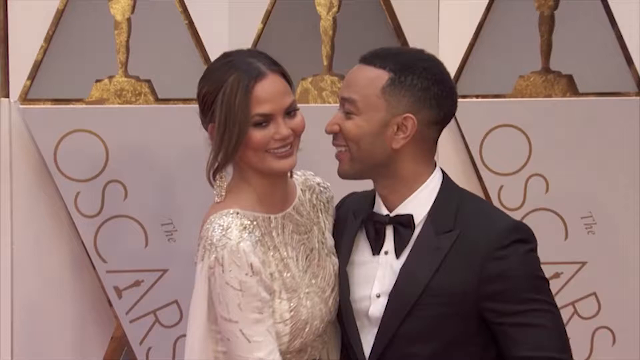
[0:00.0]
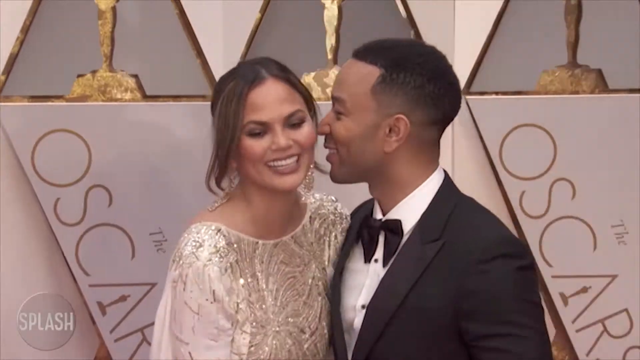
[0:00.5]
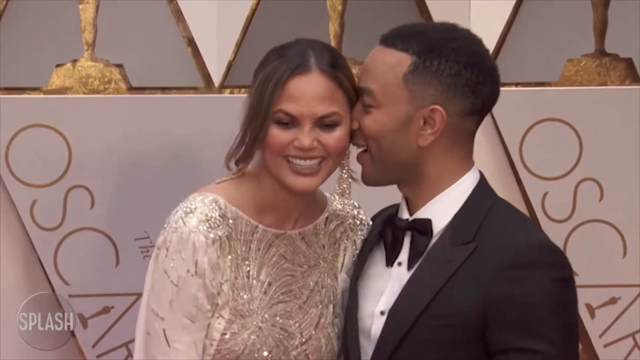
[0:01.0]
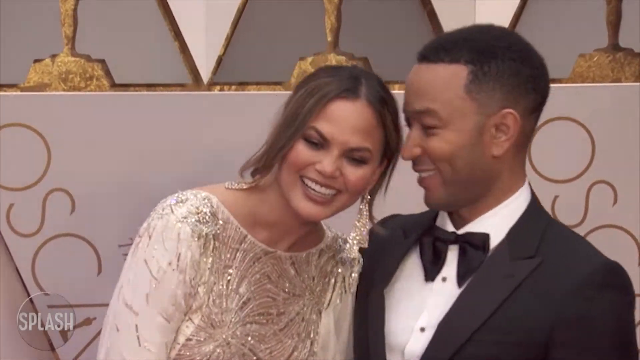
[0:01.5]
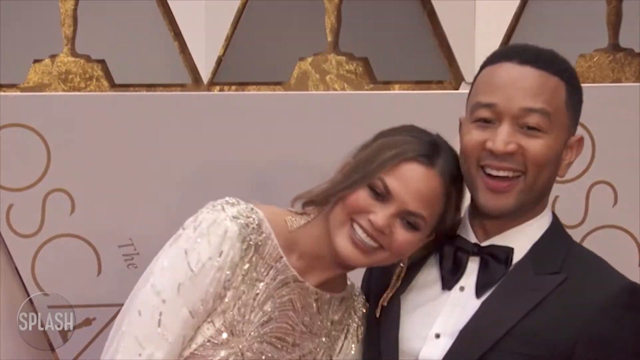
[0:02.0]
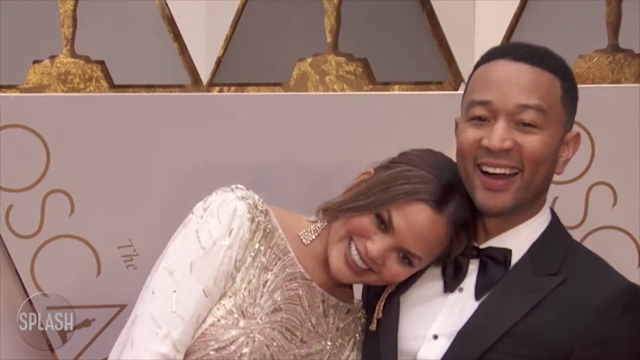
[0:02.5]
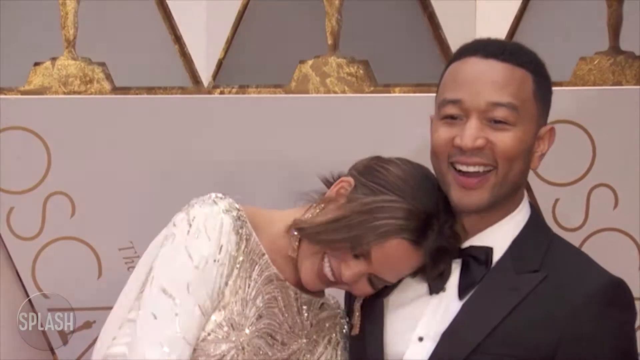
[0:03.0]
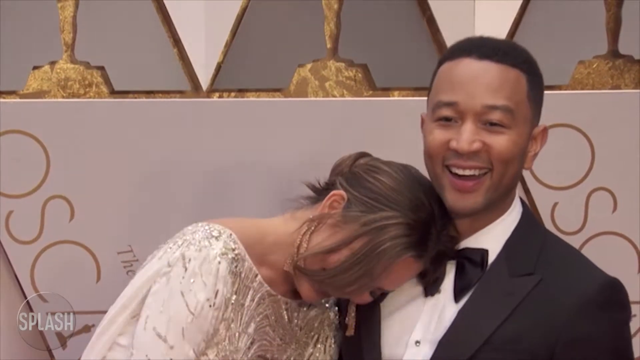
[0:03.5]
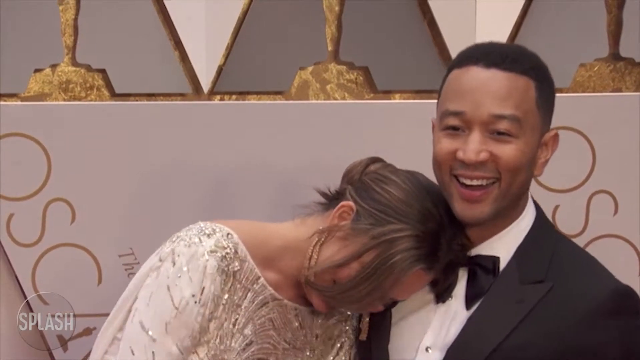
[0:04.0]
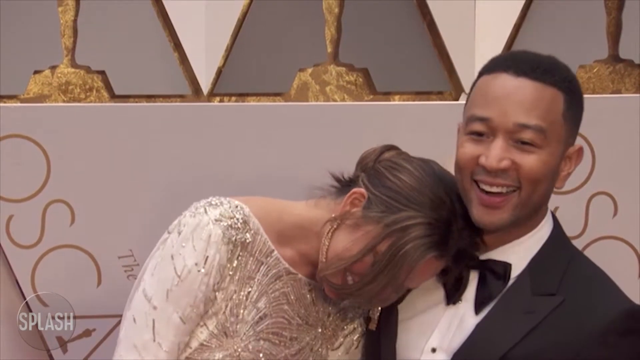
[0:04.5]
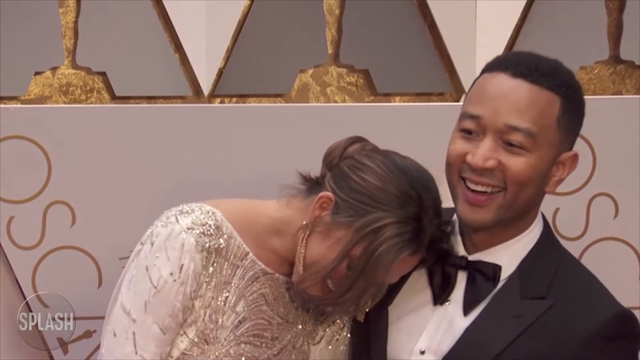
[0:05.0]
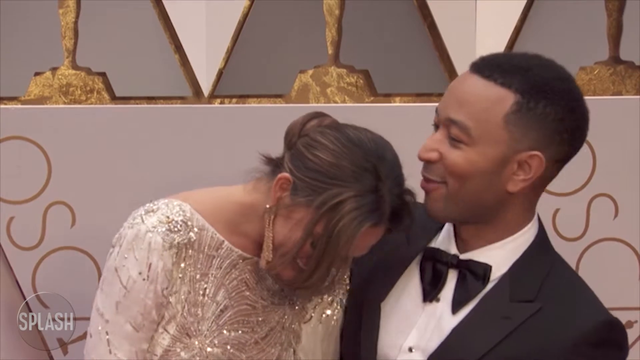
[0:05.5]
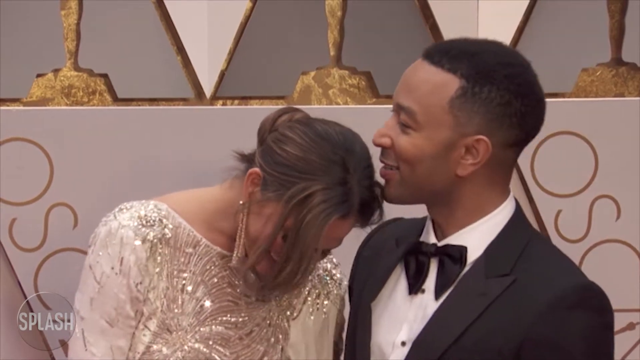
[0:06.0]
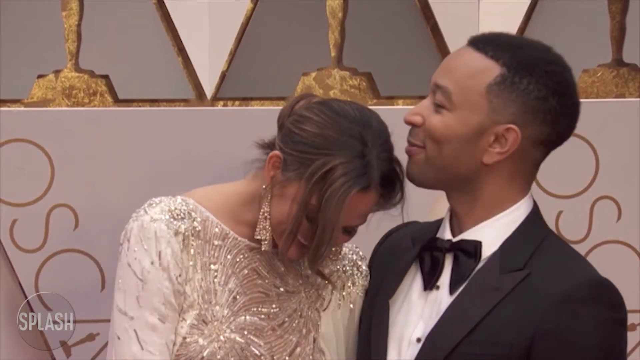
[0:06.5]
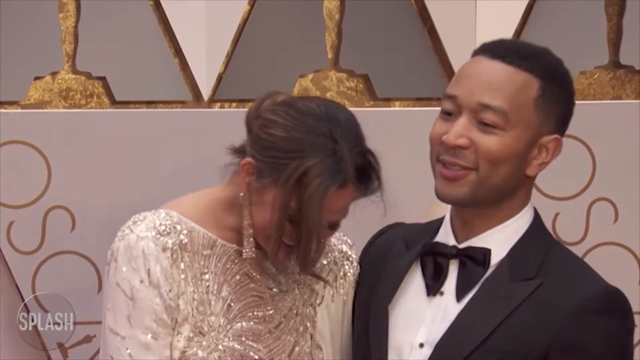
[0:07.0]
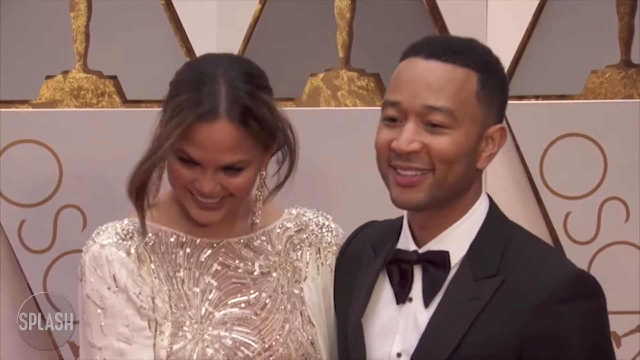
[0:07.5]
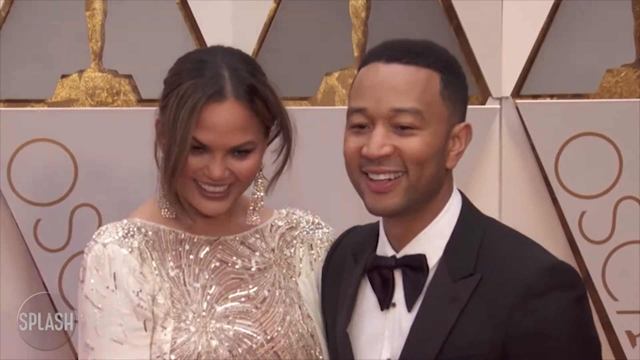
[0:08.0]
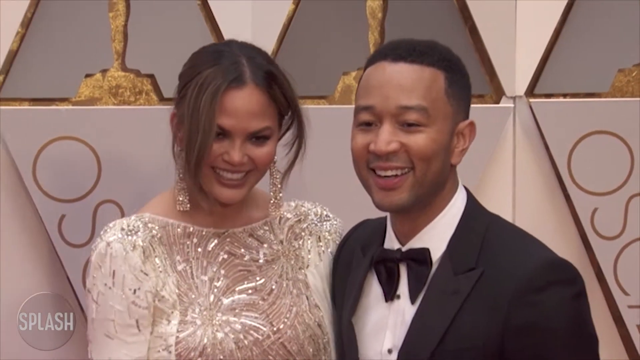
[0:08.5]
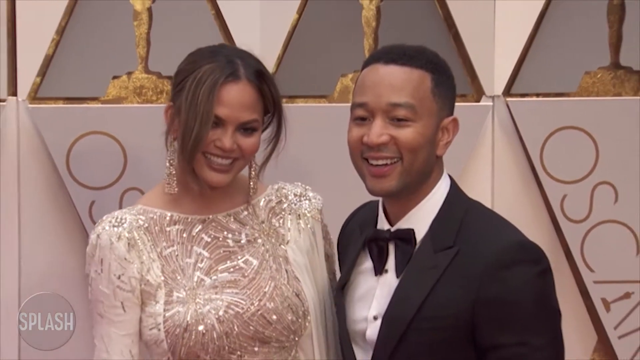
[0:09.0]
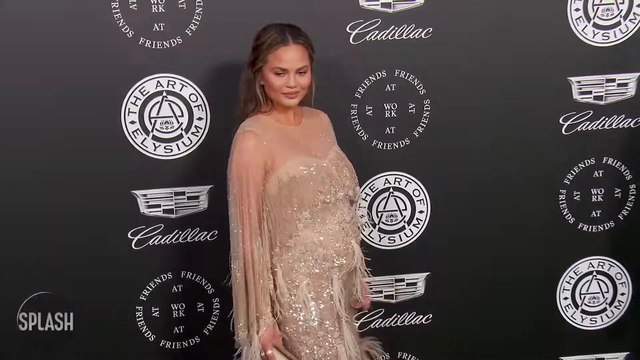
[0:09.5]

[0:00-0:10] The video is apparently about John Legend and Chrissy Teigen at the Oscars, and it opens with footage of them there. They pose, laugh and talk together. John Legend wears a tuxedo with a black bow tie and a black jacket, and his hair is freshly shaved. Chrissy wears a white dress with gold on it and gold earrings, with her hair mostly put up. Chrissy then appears in front of a black Cadillac banner covered with various Cadillac logos, posing for photos in her white and gold dress.